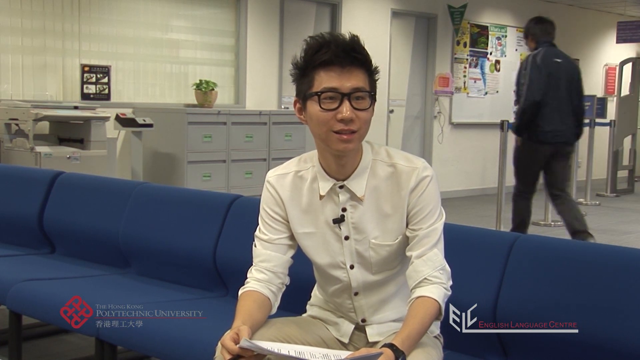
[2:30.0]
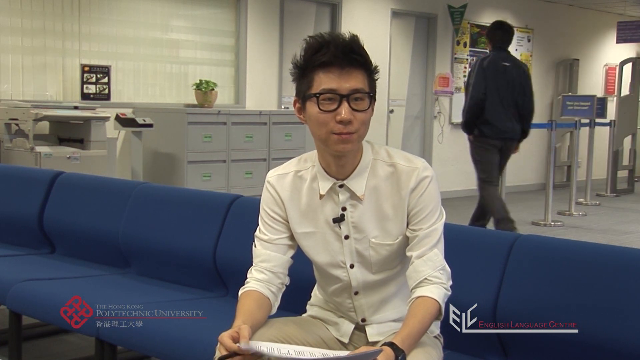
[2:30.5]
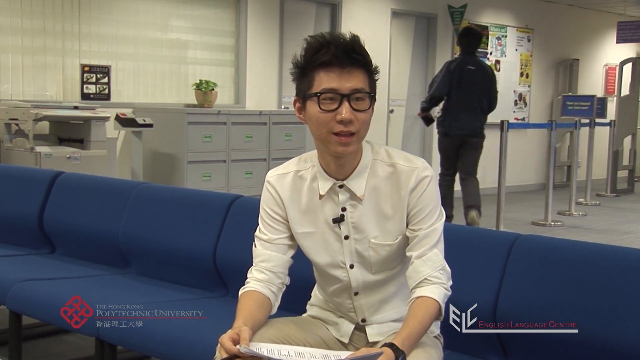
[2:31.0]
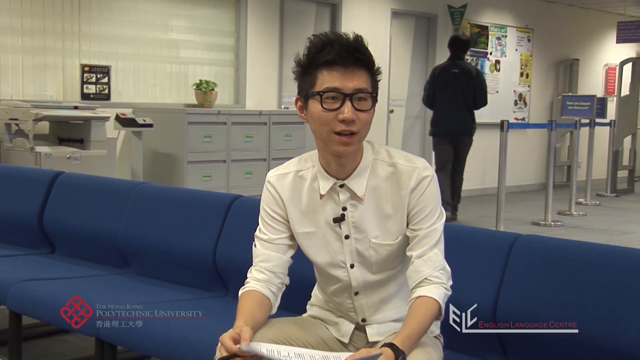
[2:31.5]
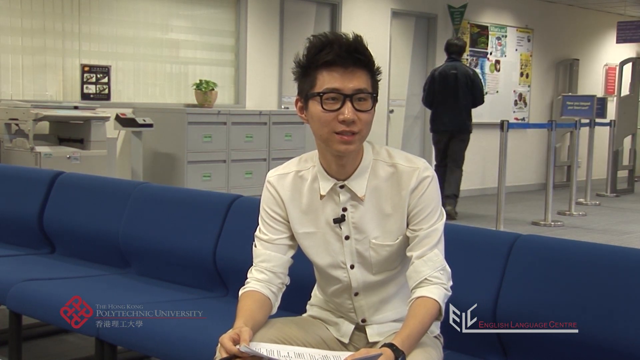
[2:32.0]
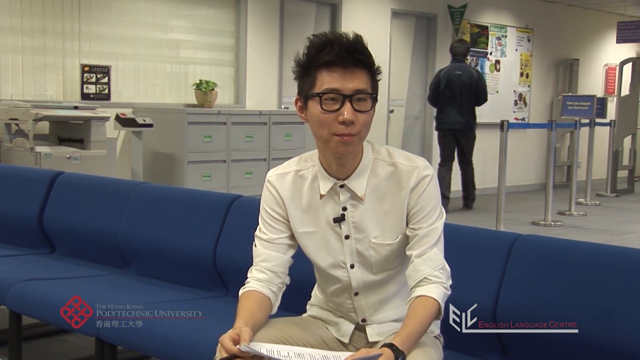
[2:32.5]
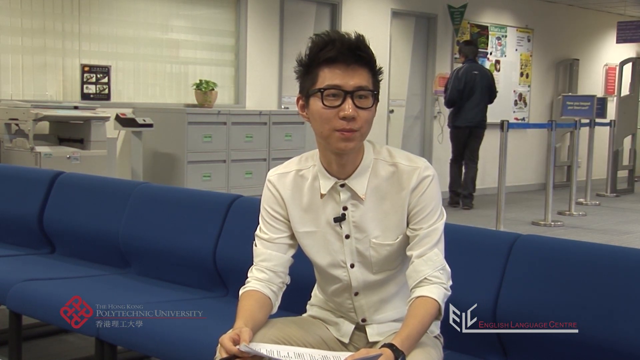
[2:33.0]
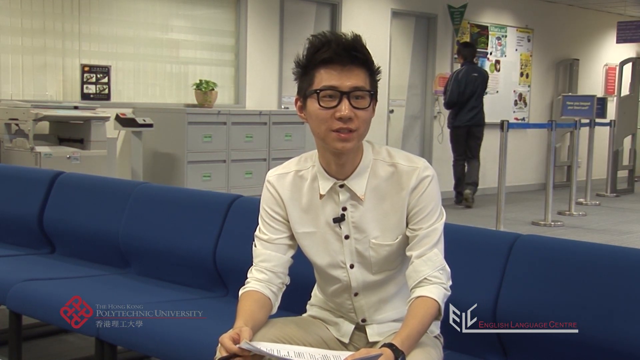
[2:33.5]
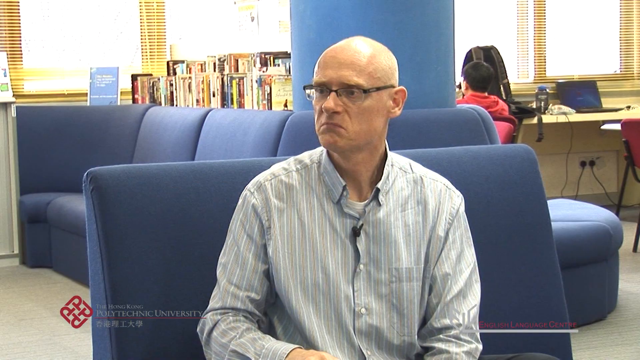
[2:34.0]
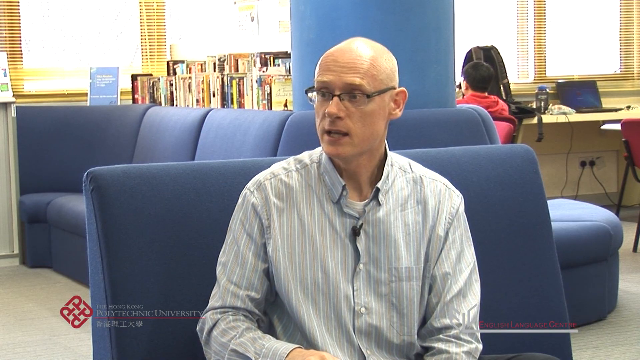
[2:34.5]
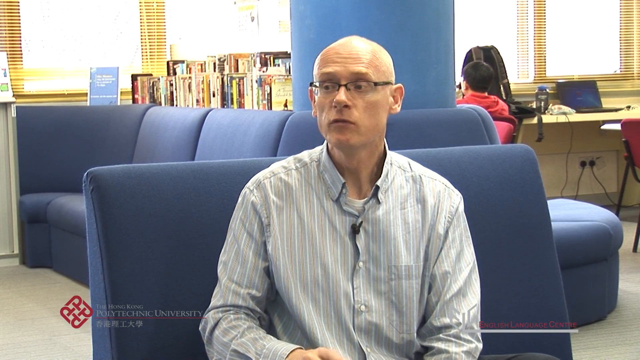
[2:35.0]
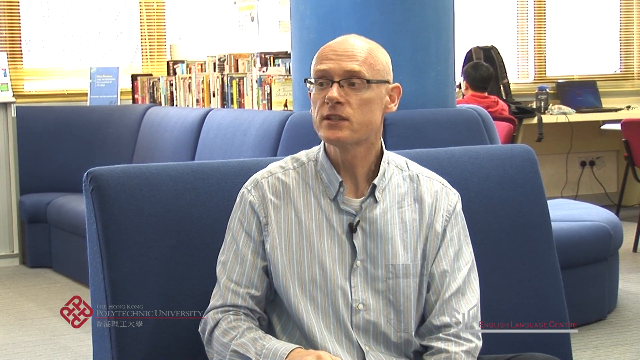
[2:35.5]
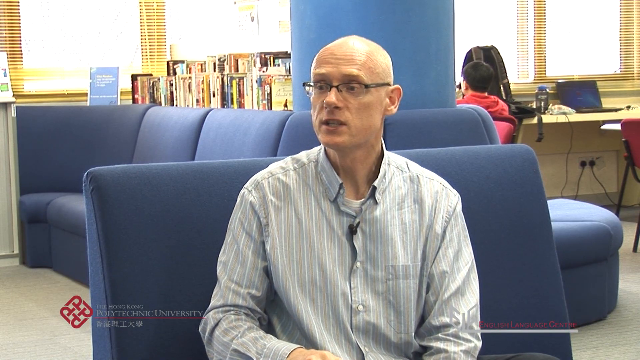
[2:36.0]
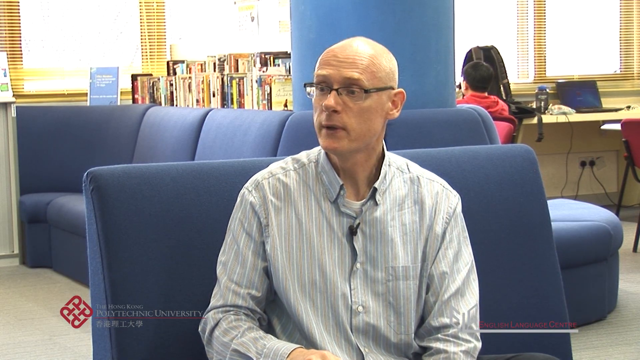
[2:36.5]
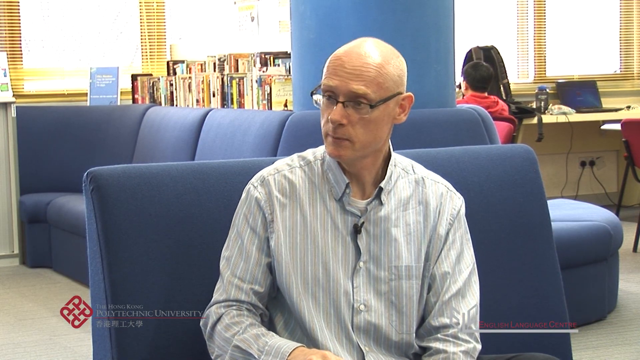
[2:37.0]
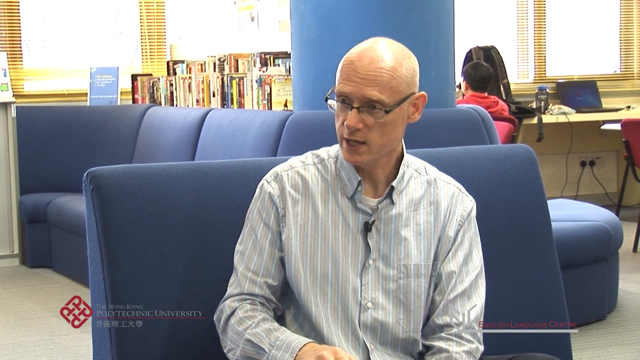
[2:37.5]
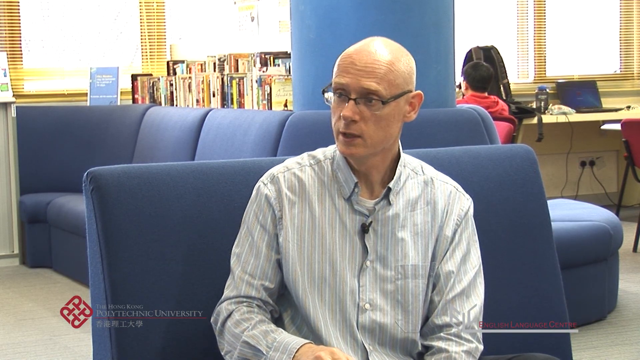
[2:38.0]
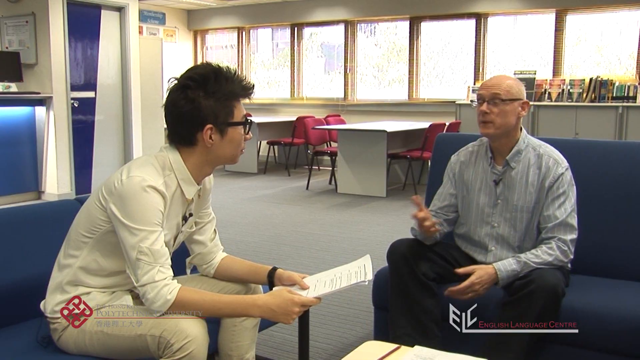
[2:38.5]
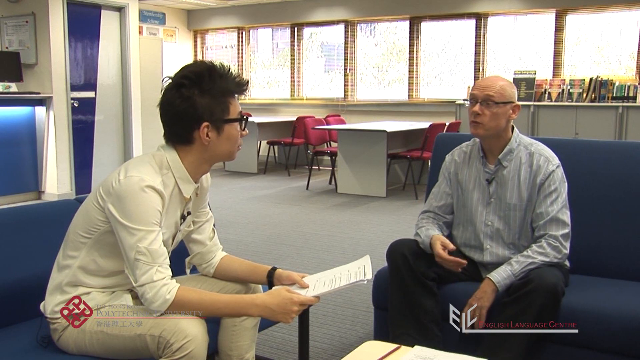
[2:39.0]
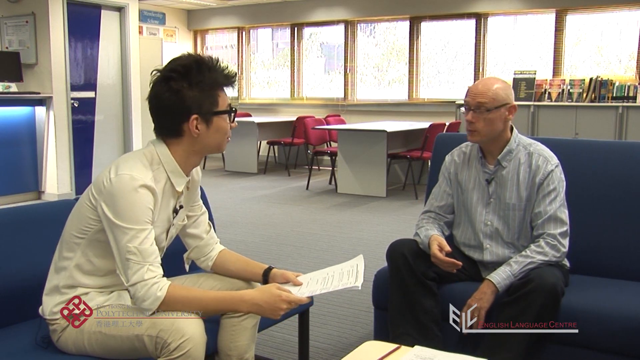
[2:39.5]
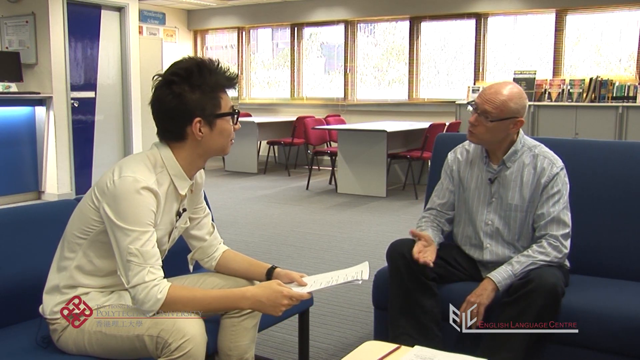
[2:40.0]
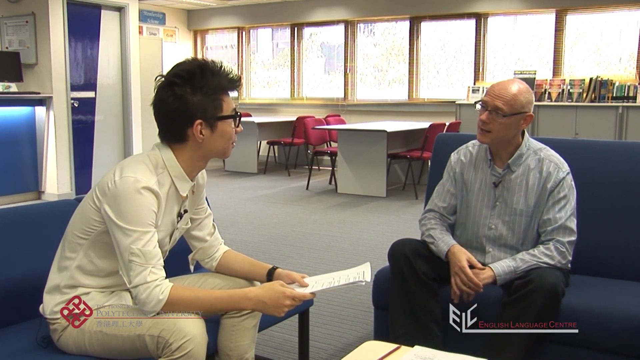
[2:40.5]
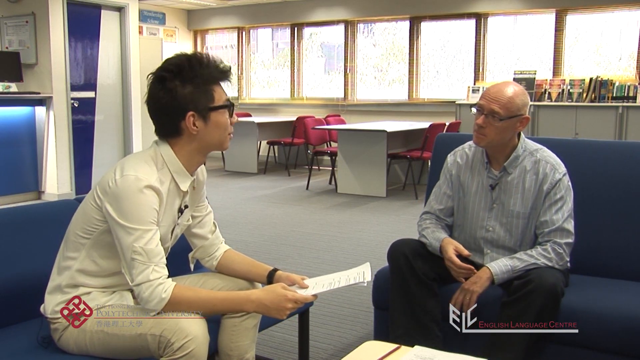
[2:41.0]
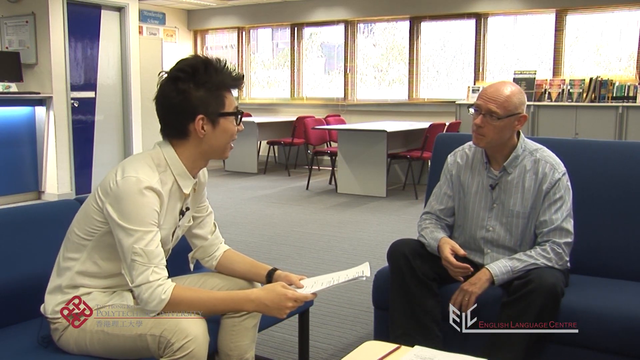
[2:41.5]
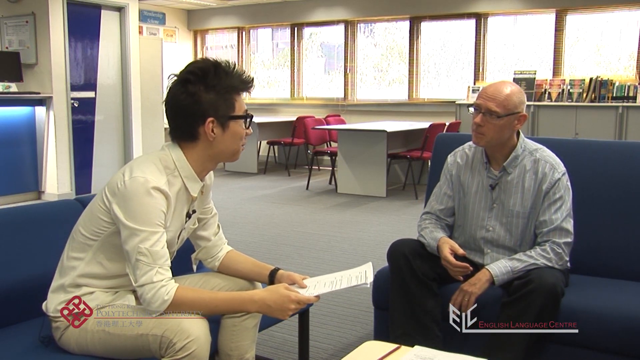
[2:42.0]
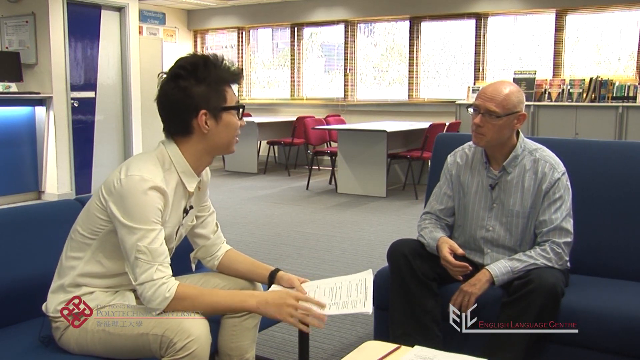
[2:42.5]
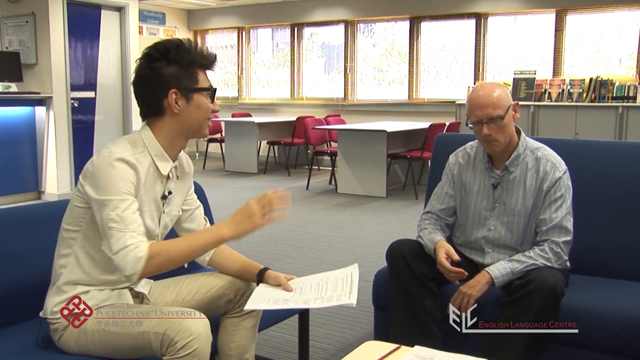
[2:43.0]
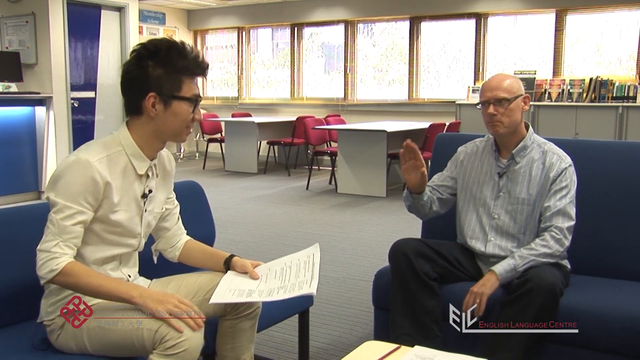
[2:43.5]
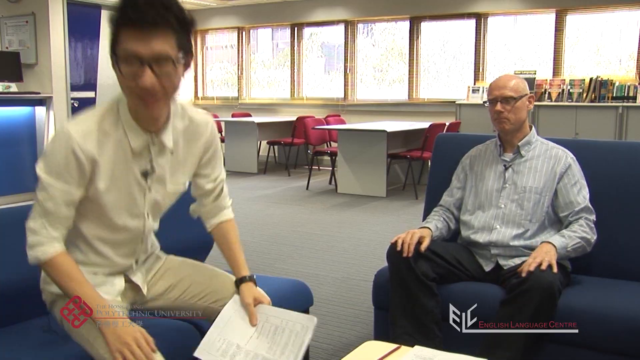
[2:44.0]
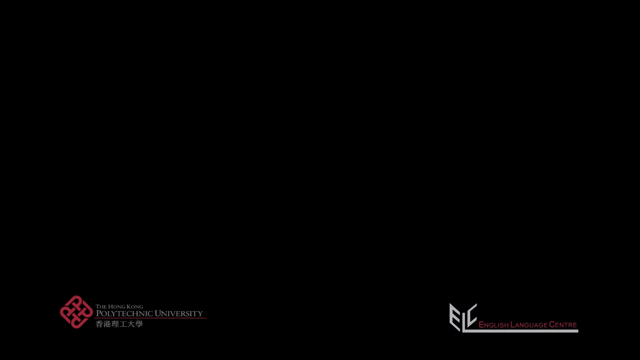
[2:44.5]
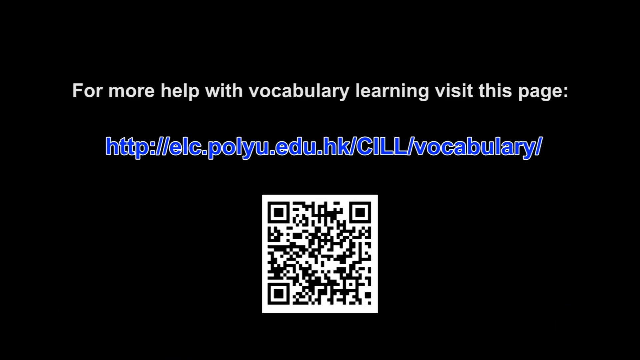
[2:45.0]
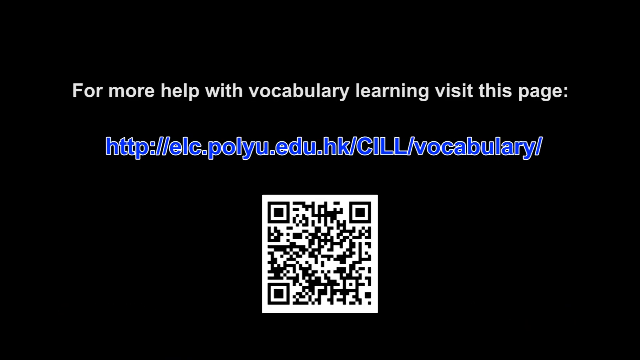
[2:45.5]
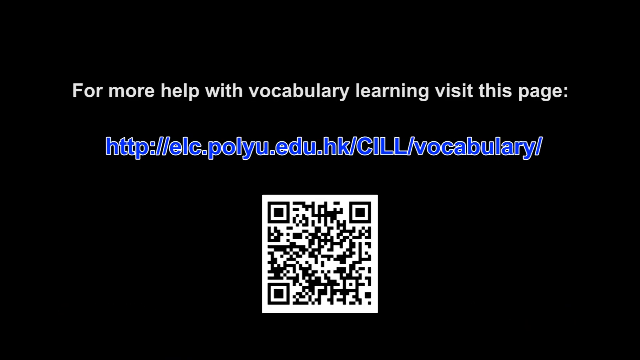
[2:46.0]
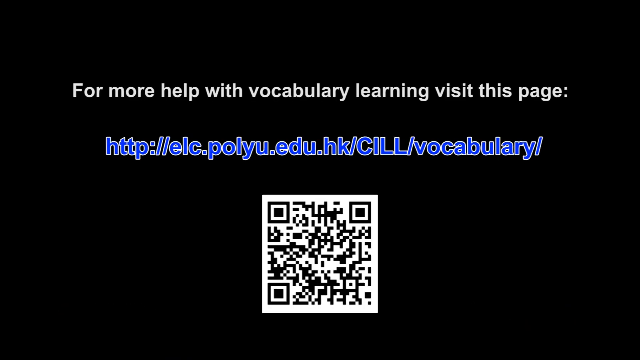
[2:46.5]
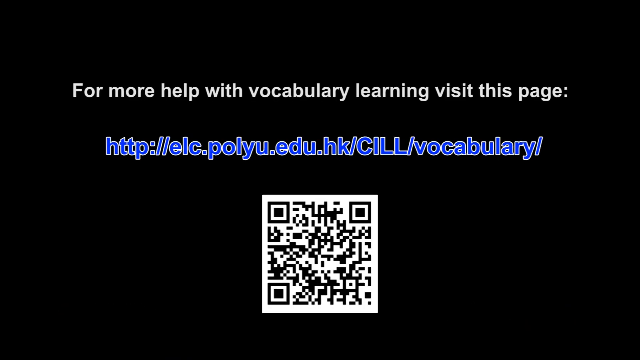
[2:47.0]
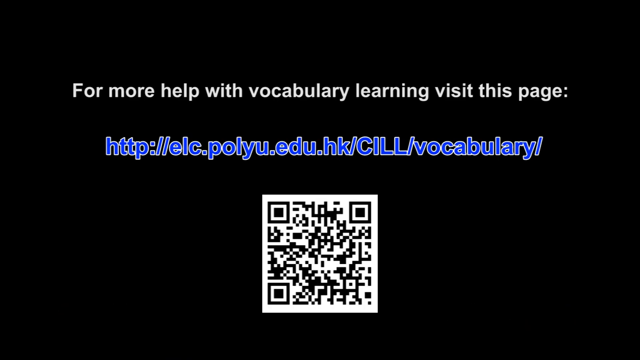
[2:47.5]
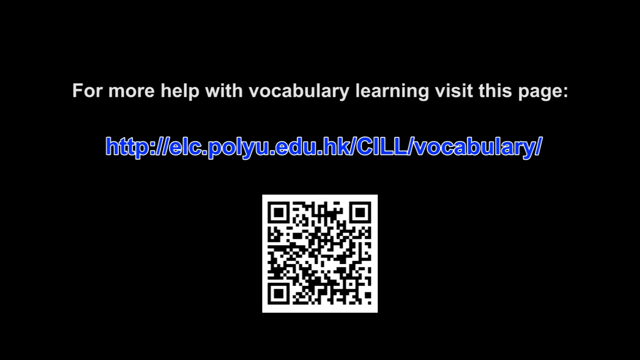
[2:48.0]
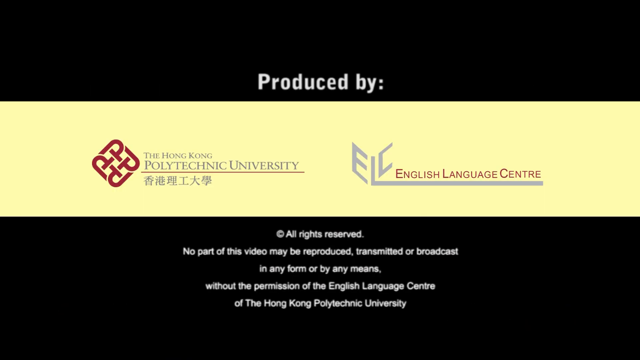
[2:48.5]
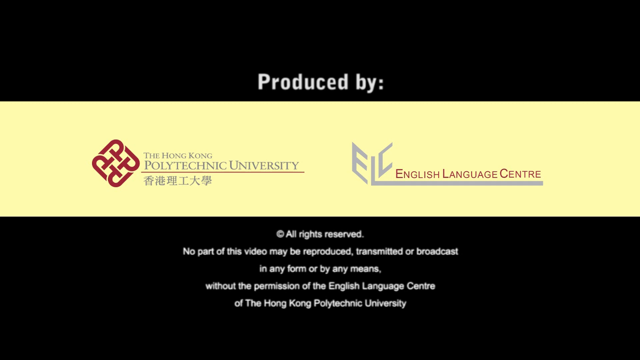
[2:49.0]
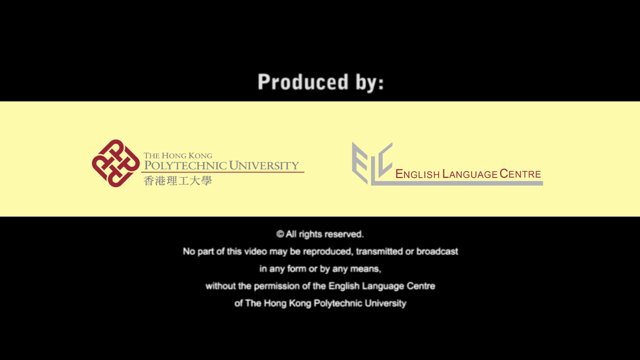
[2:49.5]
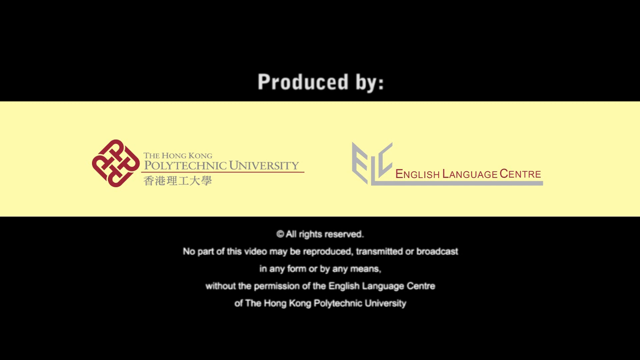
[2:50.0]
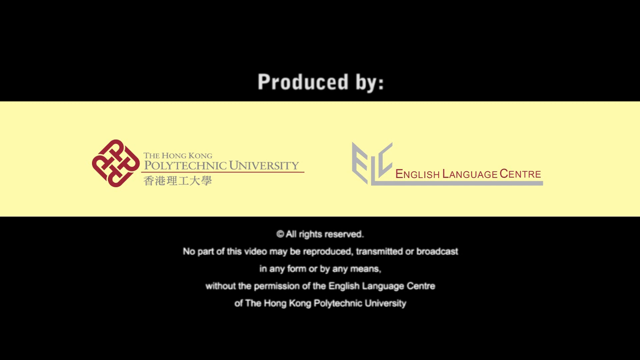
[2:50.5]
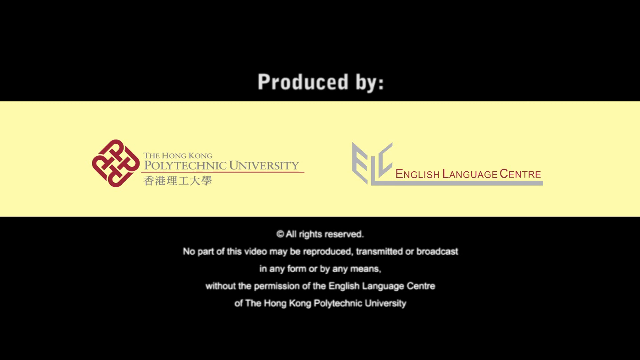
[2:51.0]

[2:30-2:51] A young Asian male is sitting on a series of blue couches in a library, with filing cabinets, a photocopier, and a printer behind him. A student wearing a jacket walks in the background. In the bottom left of the screen is the text "the Hong Kong Polytechnic University" with the university's logo in red. The student wears glasses and is talking to the professor. The professor also wears glasses, with a vertically striped blue, white, and gray long-sleeved shirt over a white t-shirt, and is sitting on a blue double couch, with a student working in the background. The angle changes slightly, and the same two are talking together. In the background are small tables with four red chairs each, windows looking outside that bring in natural light, books on a shelf on the right, and a door on the left with what looks like the Red Bull logo. The two appear to wrap up the conversation: they wave to each other and nod, and the student gets up with his papers and walks toward the right.